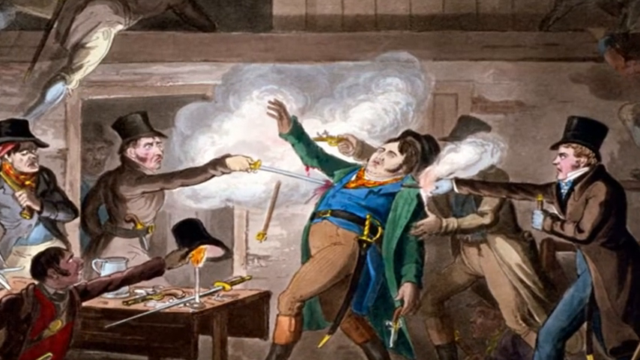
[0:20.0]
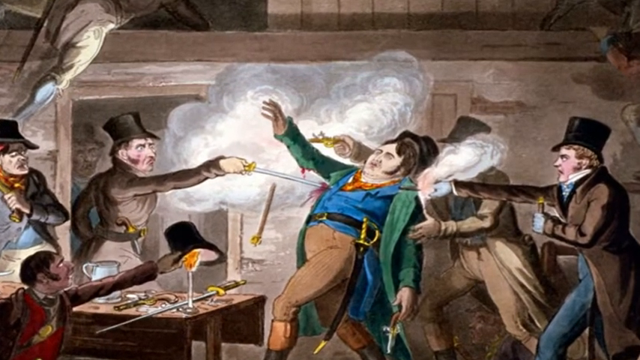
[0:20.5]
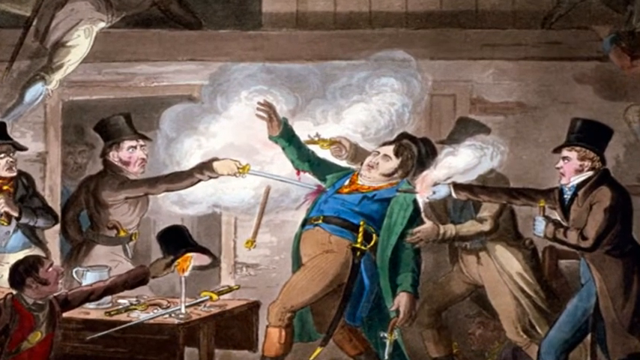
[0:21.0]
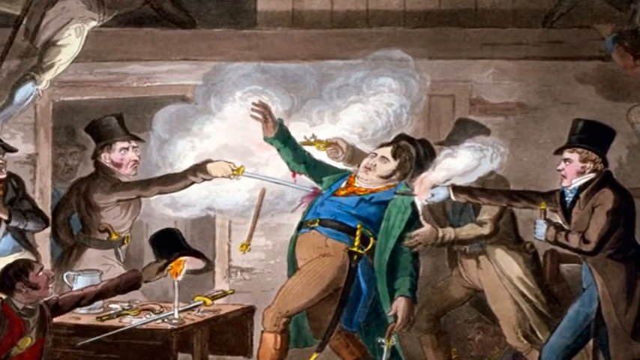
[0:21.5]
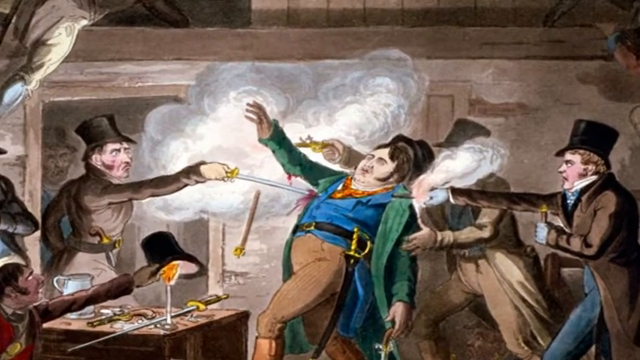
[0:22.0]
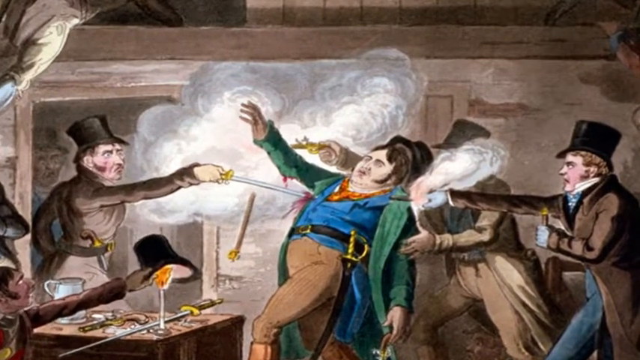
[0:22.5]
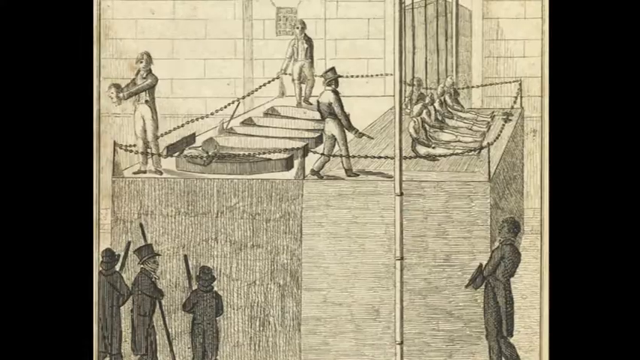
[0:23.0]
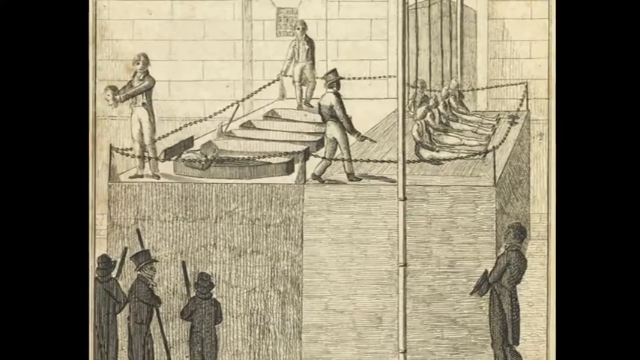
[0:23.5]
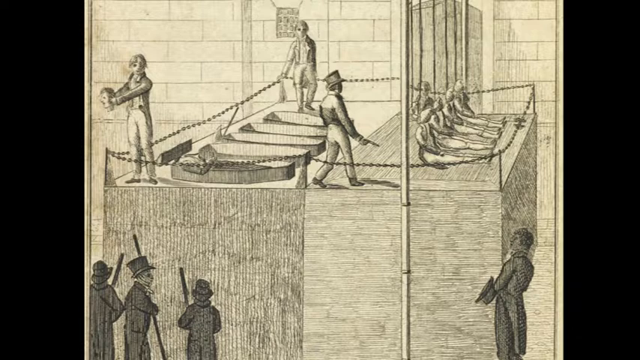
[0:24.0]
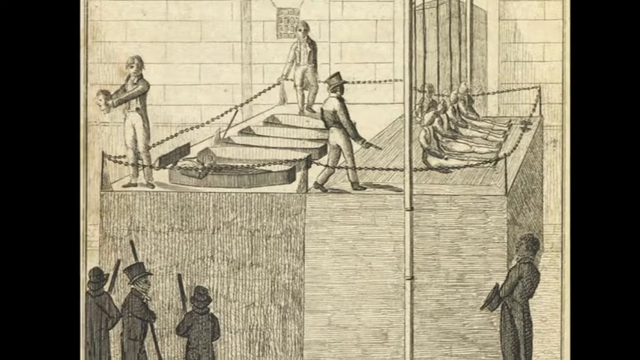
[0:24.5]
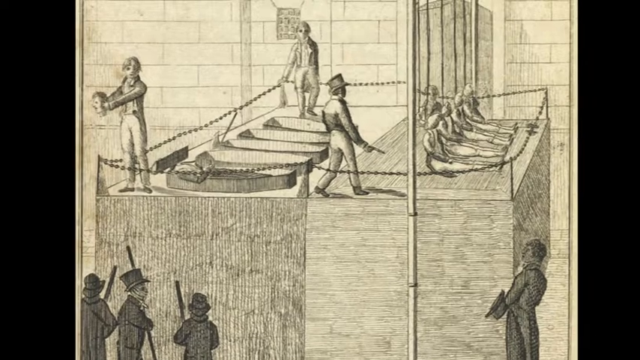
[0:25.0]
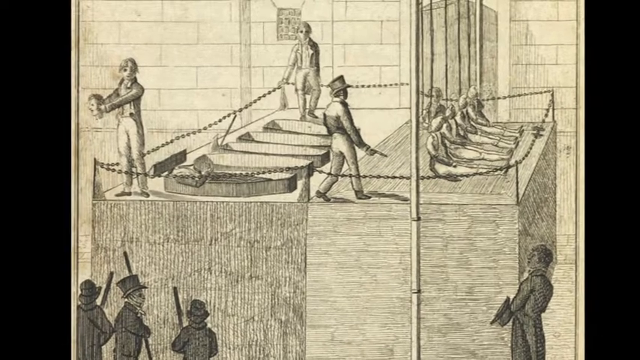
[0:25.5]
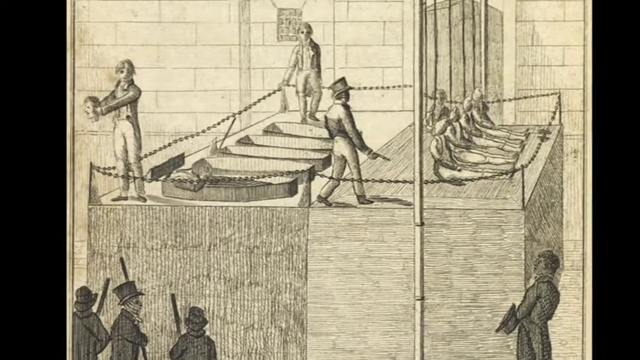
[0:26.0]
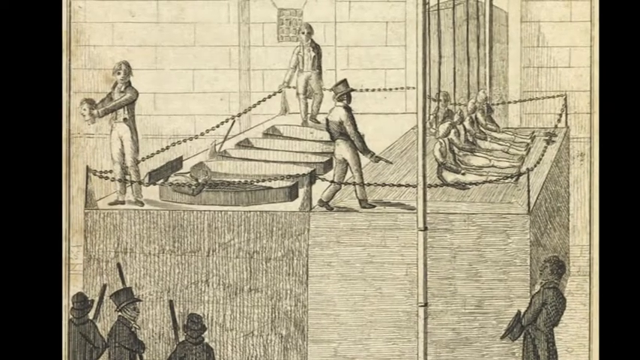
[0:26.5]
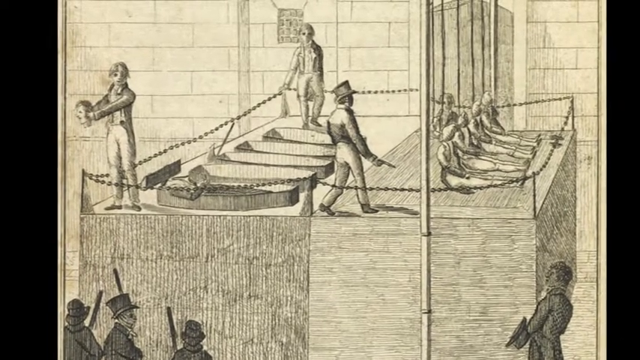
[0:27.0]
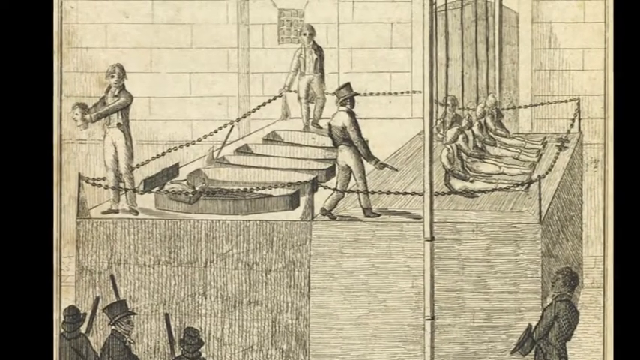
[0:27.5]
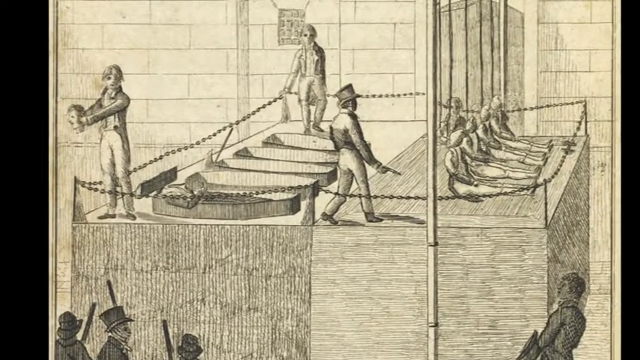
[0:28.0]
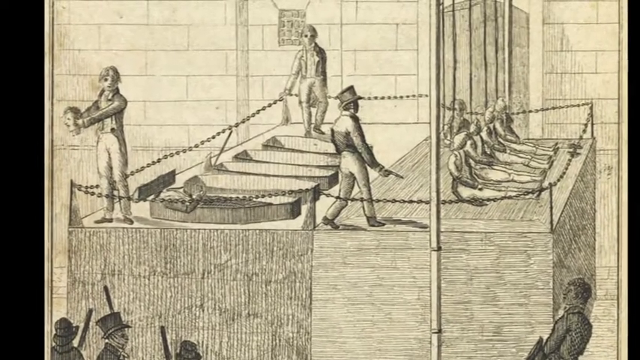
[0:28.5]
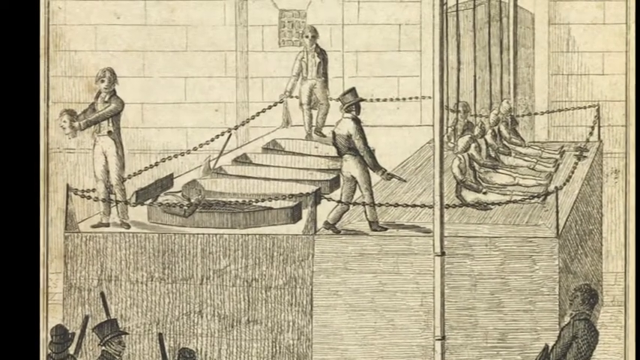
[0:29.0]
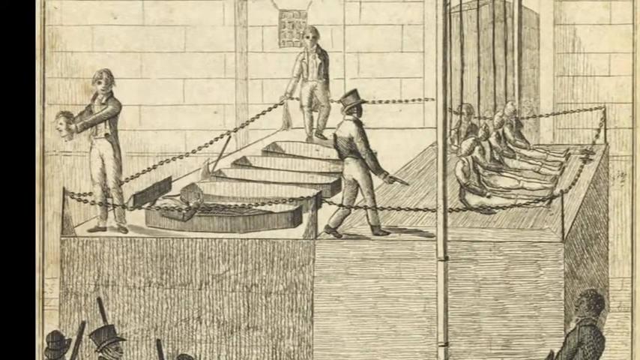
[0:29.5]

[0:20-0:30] A close-up shot shows the same drawing of the fight. Three people are on the right. One of them appears to be getting stabbed with a sword; he has his right hand in the air and a very blank expression, with white skin, short brown hair, a blue jacket, and brown pants. The two men behind him wear brown jackets and black top hats and also have white skin. The man to the right behind the man being stabbed aims a golden gun towards the people on the left. On the left, a white man holds the sword in his right hand, doing the stabbing, with two people with scared expressions behind him. A hidden man in the doorway is also looking on. The camera sort of zooms in on the image before the scene switches to a pencil drawing of people who appear to be putting people in coffins. There are five coffins in total, three people standing at the top, and some bodies sitting down at the top right as the camera continues to zoom in.